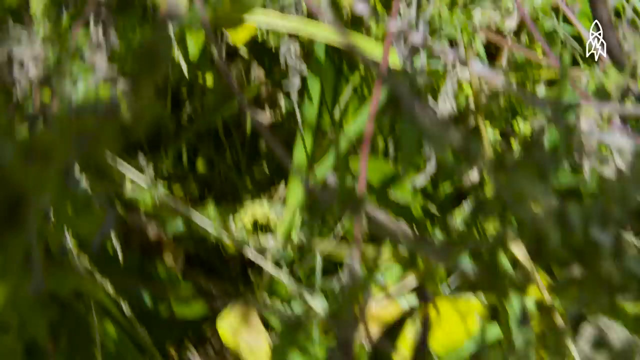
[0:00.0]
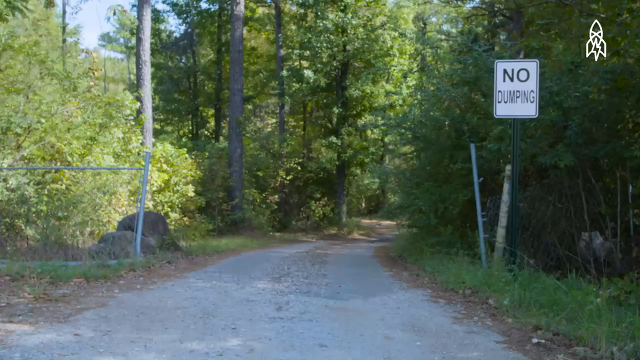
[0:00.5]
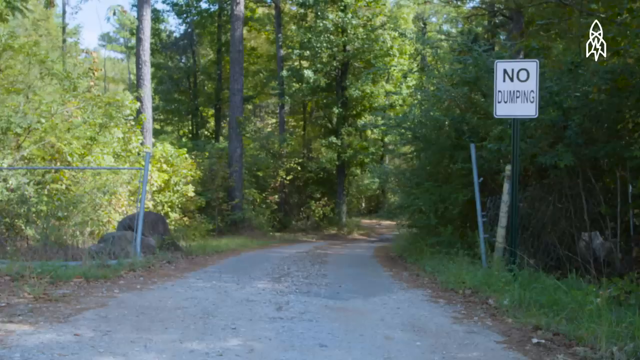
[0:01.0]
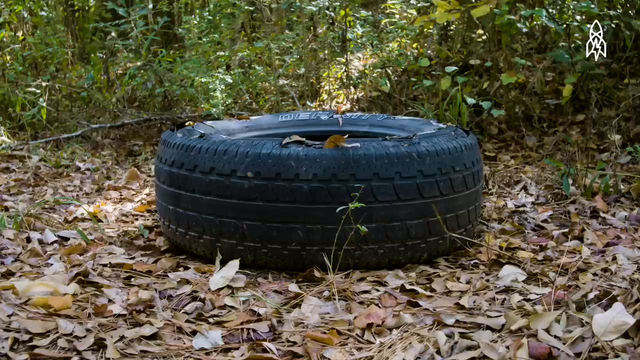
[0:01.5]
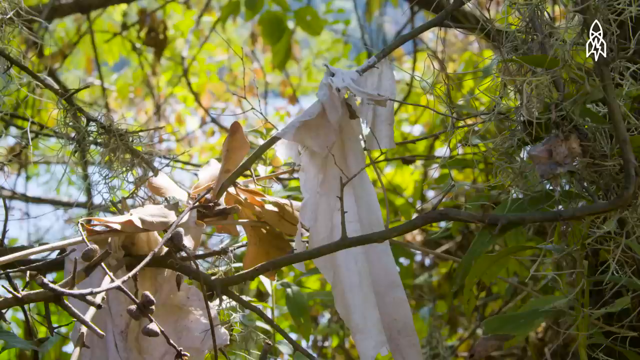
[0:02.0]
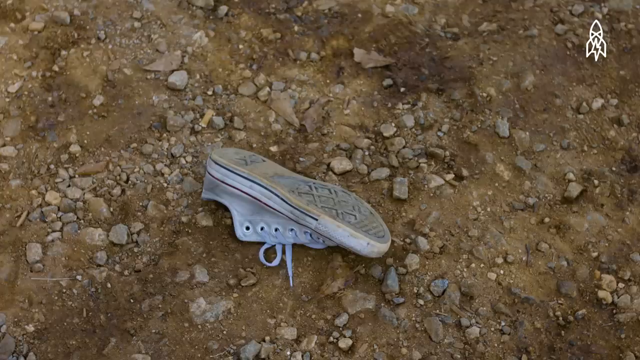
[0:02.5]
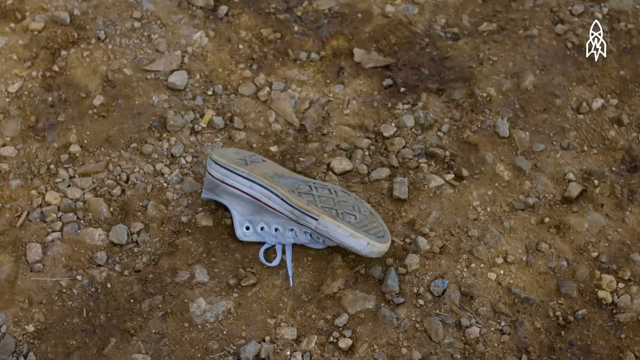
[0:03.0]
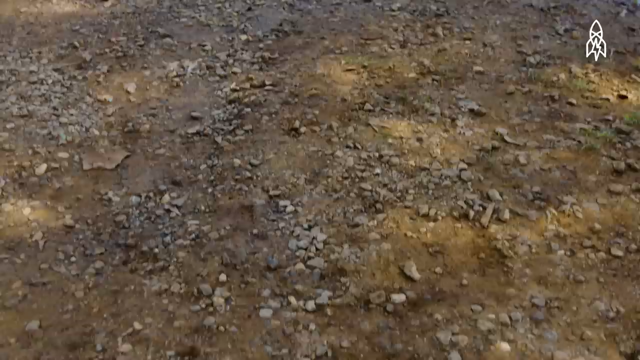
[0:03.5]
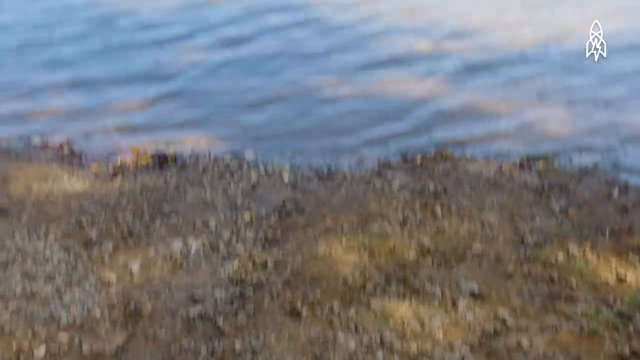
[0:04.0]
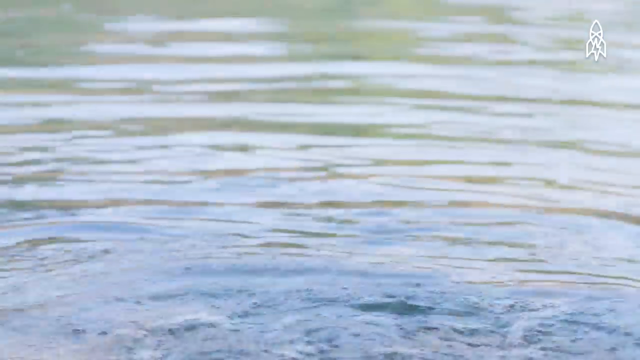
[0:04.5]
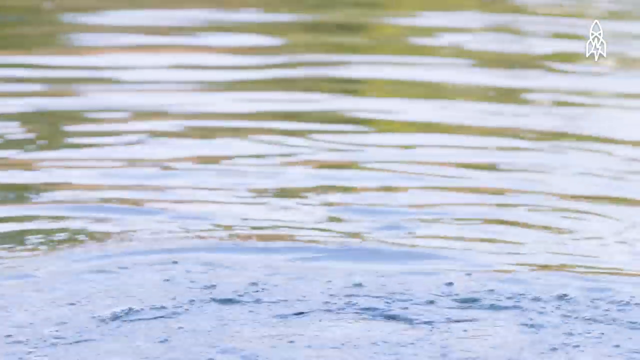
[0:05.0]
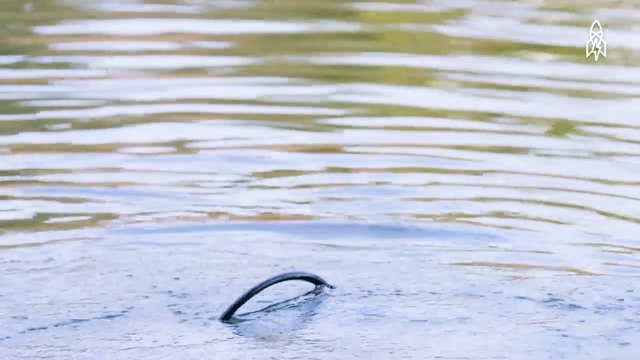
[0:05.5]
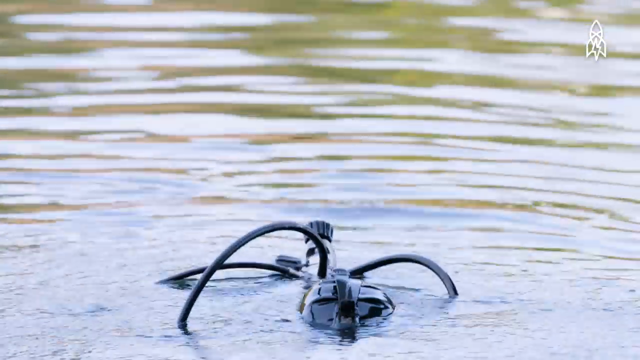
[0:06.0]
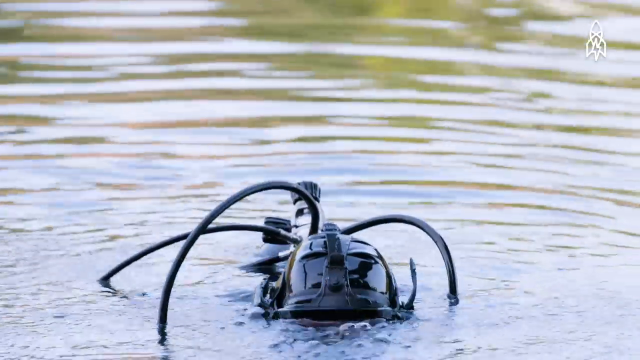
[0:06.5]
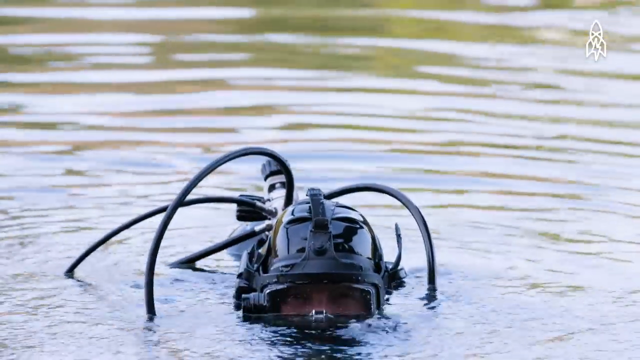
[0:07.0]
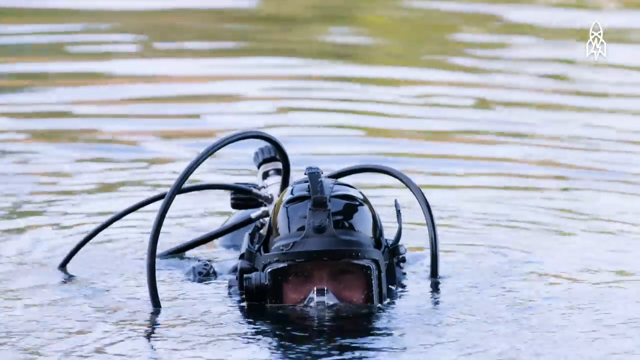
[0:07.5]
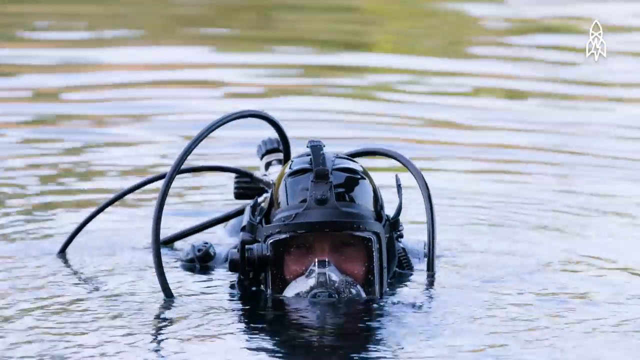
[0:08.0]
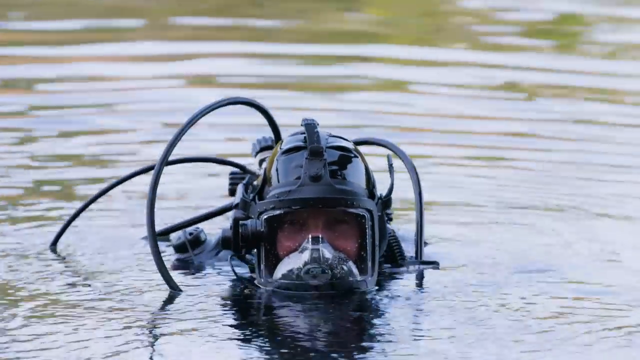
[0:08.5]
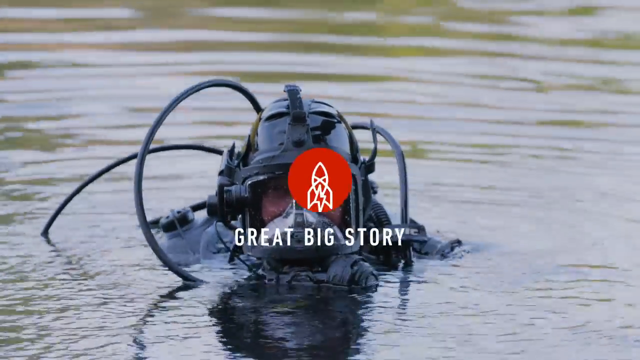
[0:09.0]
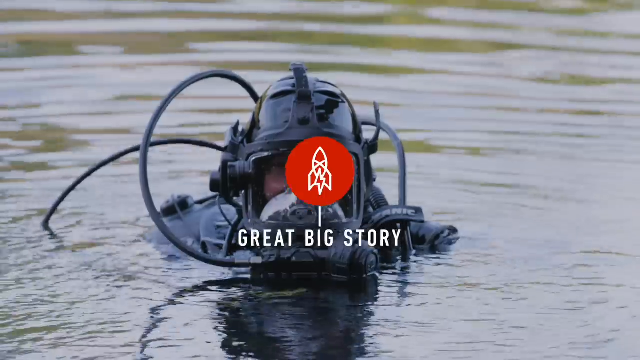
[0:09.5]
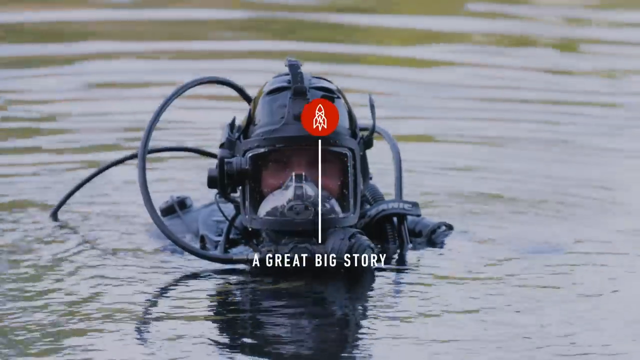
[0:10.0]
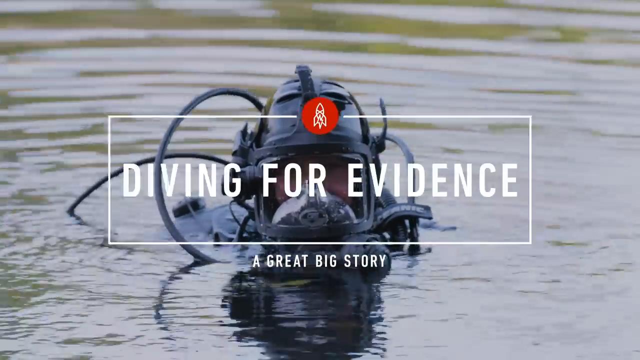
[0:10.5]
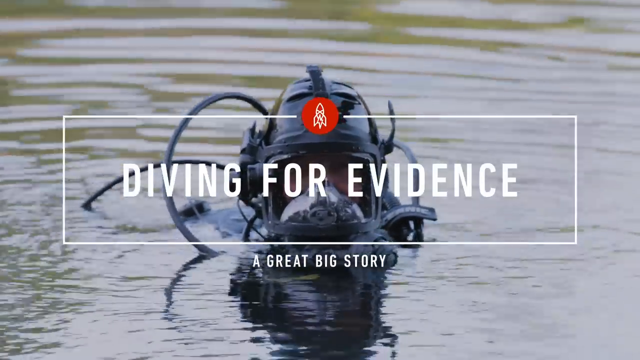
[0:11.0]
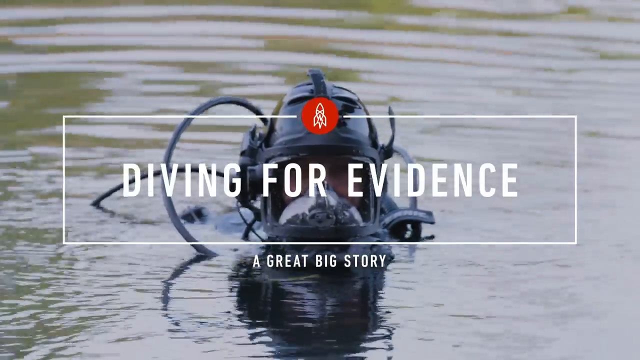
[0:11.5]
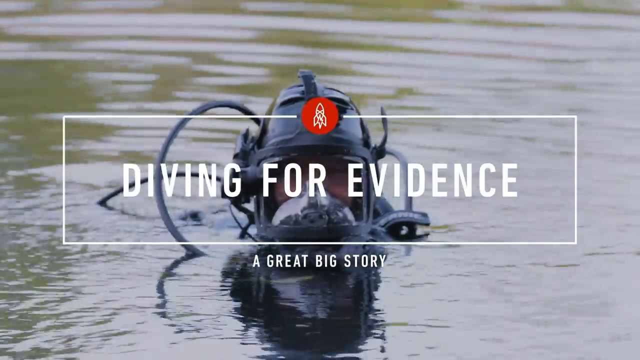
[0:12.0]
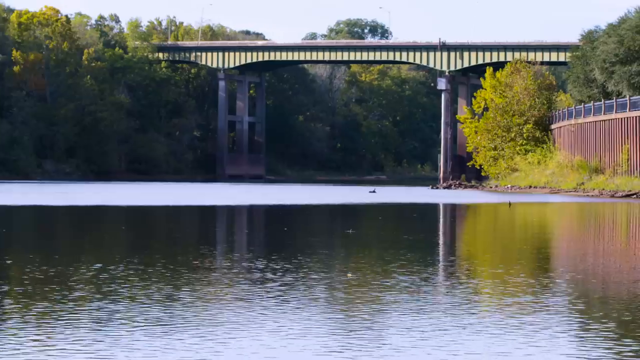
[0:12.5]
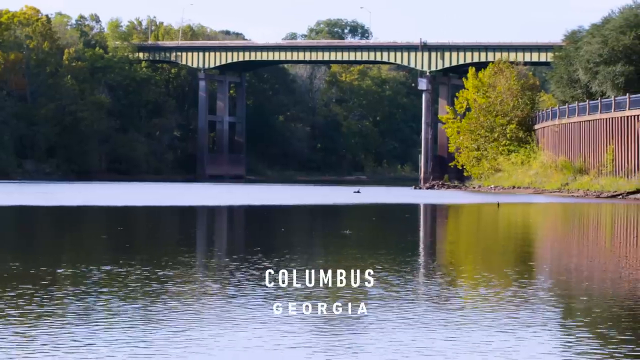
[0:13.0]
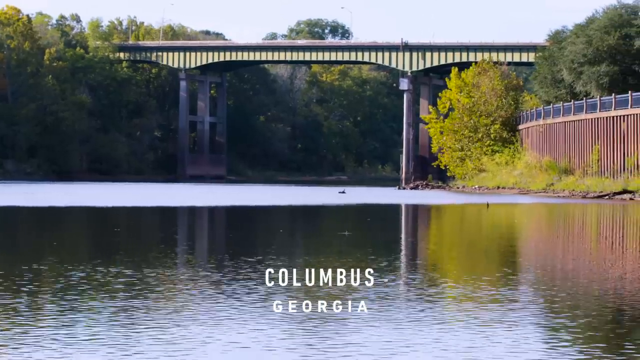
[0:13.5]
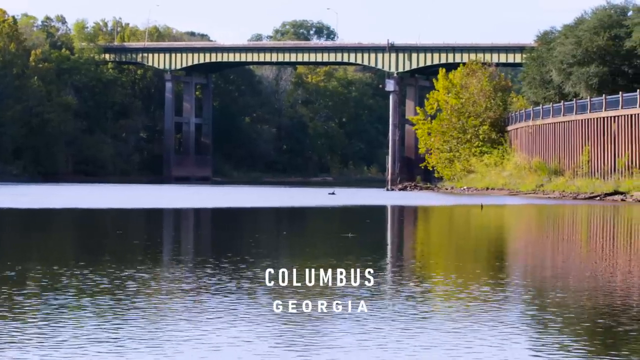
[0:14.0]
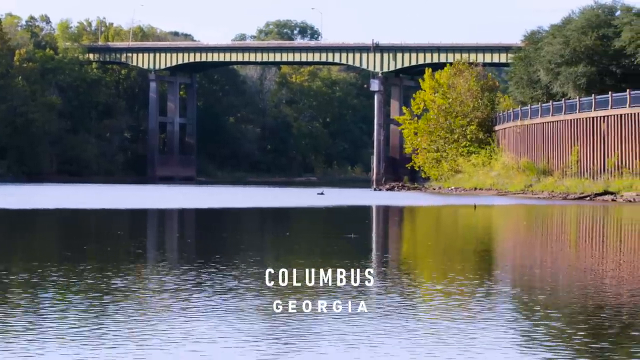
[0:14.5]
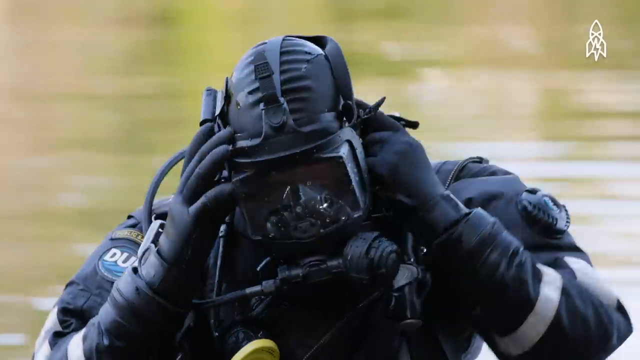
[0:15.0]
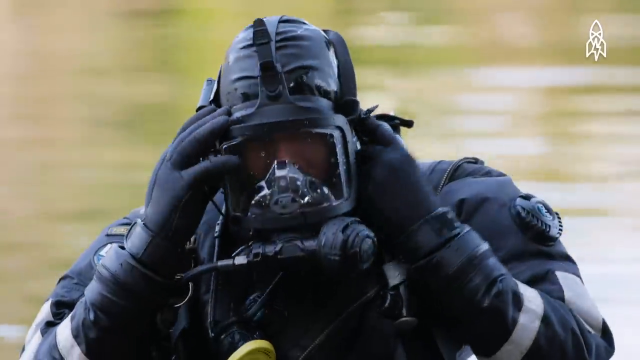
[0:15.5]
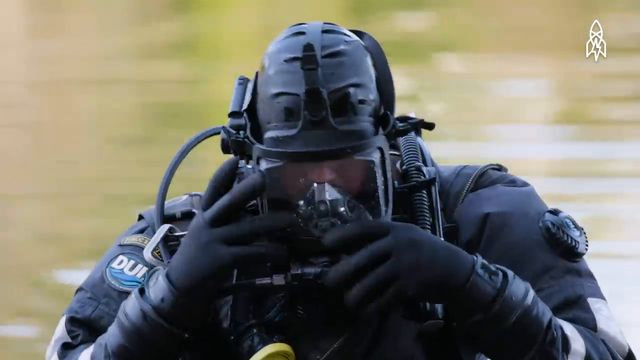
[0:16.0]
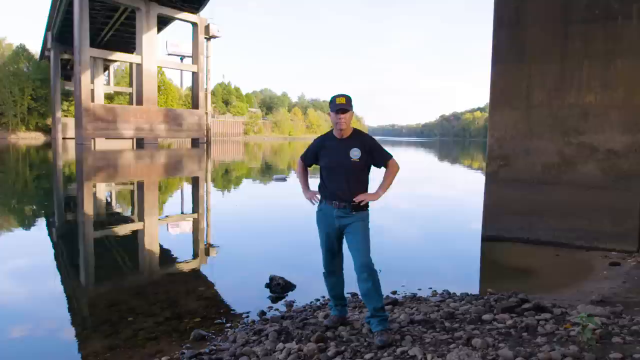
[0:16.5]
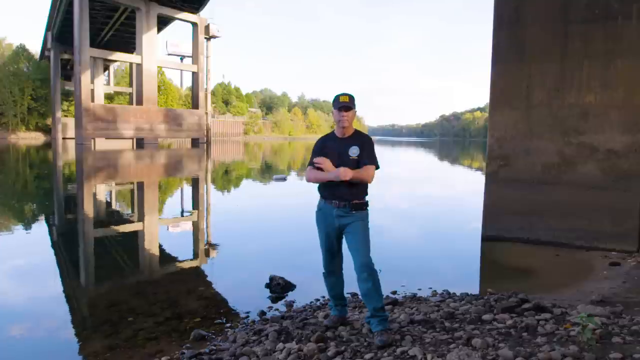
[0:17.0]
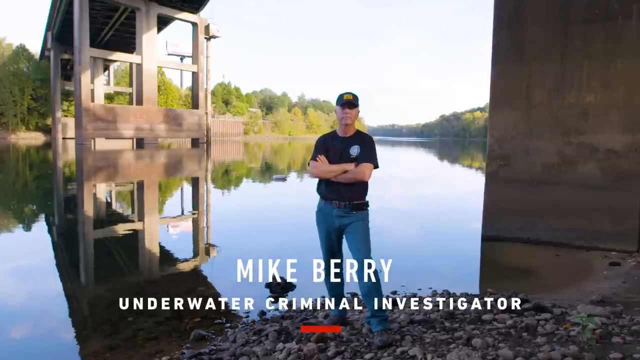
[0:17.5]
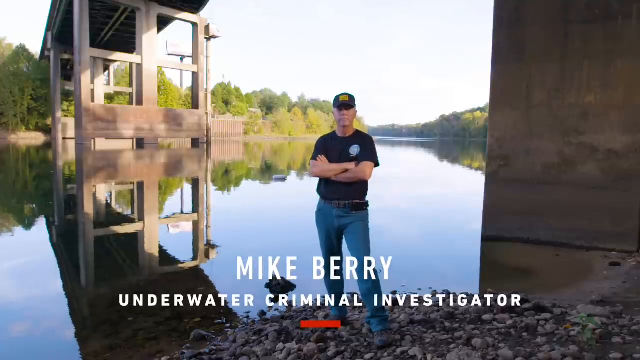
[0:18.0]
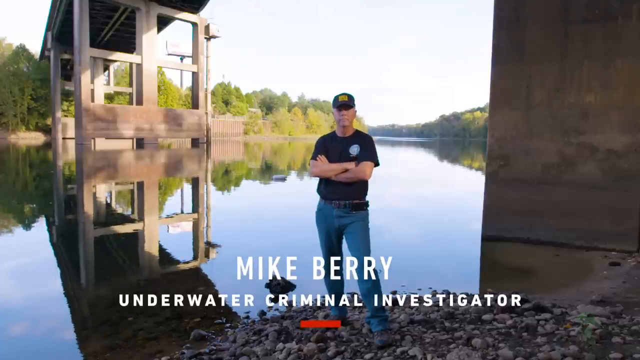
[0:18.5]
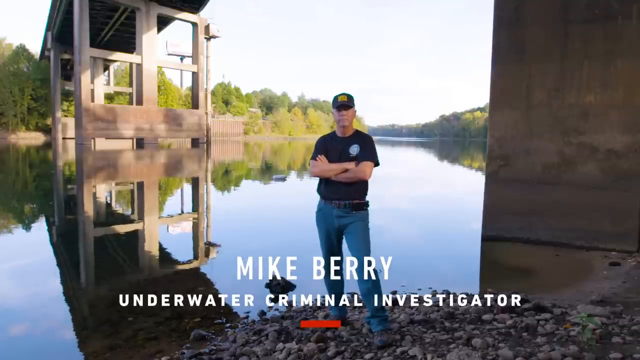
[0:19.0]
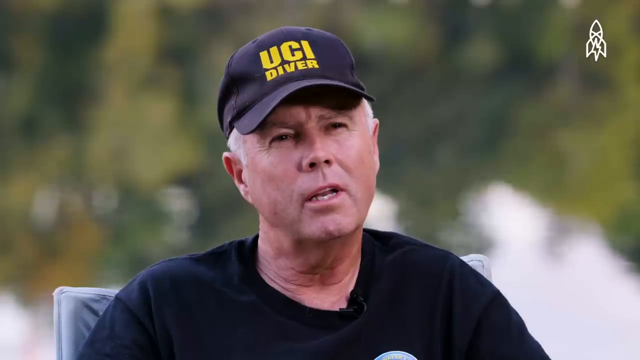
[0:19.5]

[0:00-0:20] The video opens on a forest setting with a big sign that says "no dumping" on a white background. A shoe that has been lost lies on the ground, and a white piece of clothing hangs from a tree branch; these items seem to be around the forest area, which has many trees. A diver comes out of the water wearing his diving gear. He is identified as Mike Berry, an underwater investigator. He then stands in front of a large dam, wearing normal clothes and a black ICU cap. The video is about people diving in the water to get evidence related to a missing person's case.